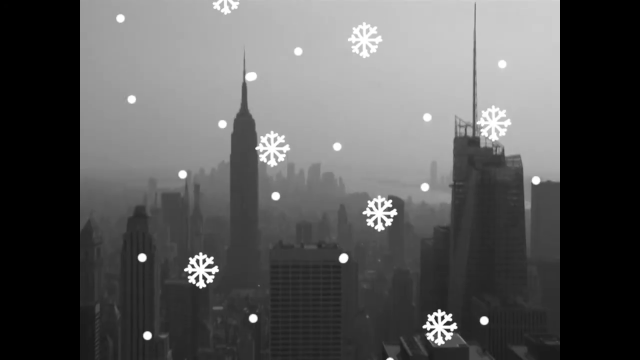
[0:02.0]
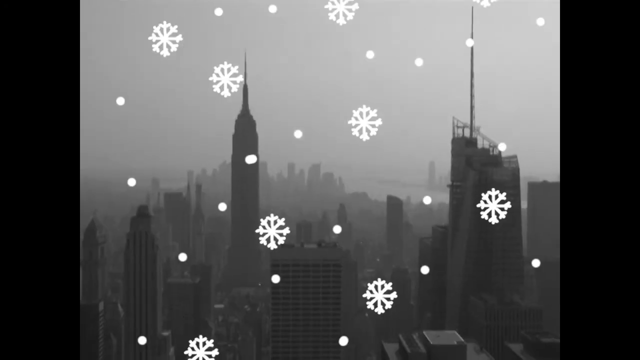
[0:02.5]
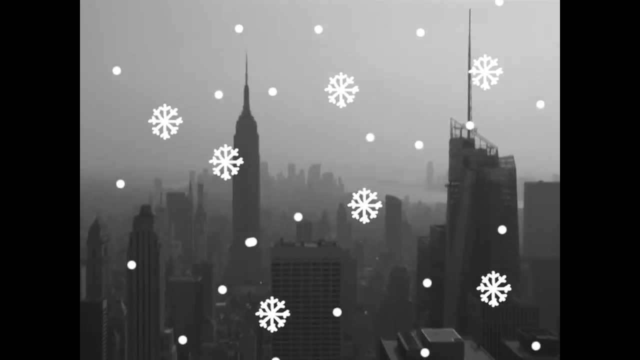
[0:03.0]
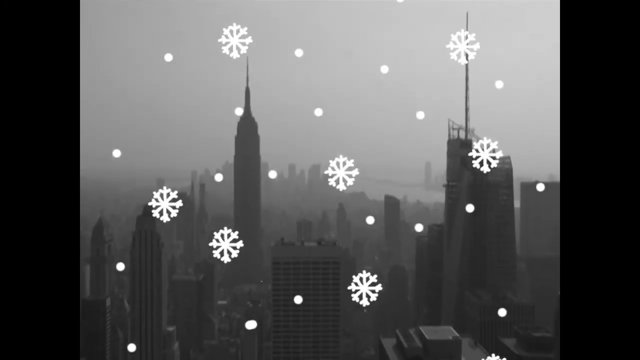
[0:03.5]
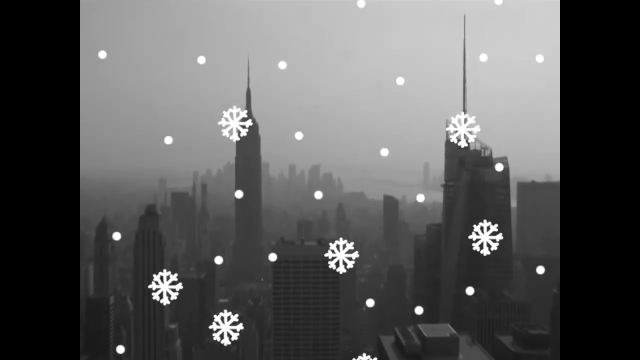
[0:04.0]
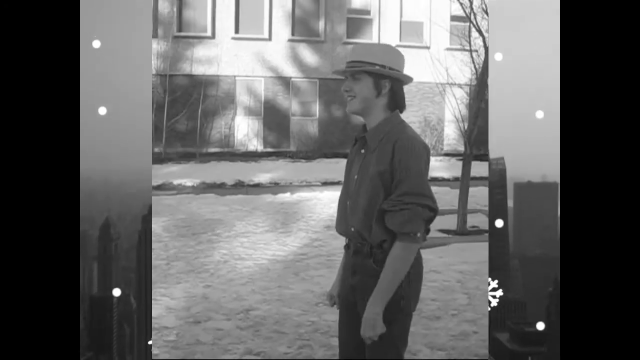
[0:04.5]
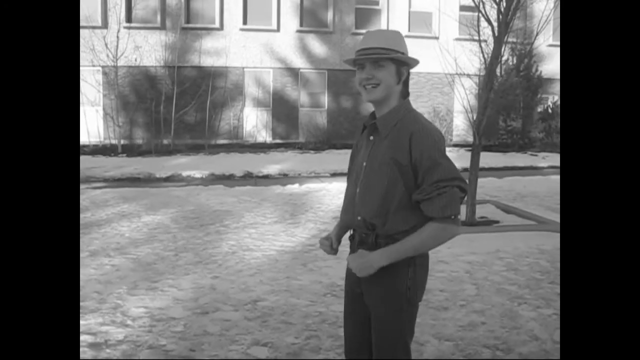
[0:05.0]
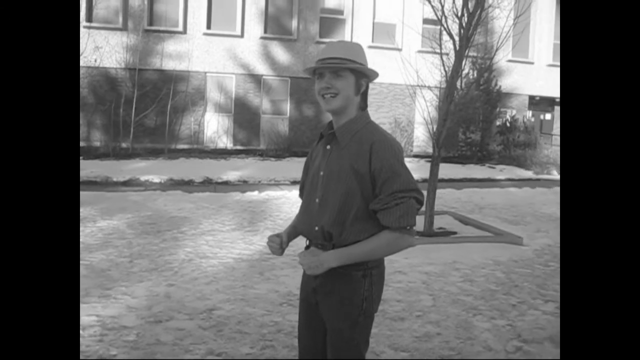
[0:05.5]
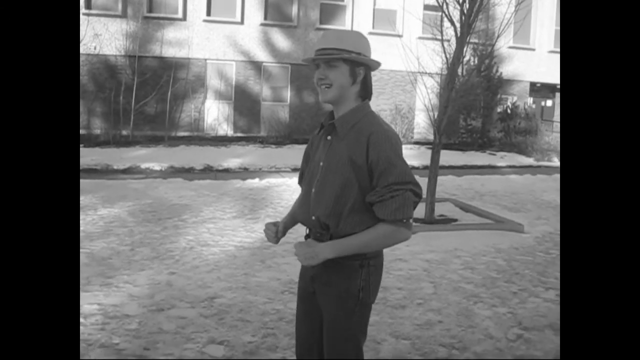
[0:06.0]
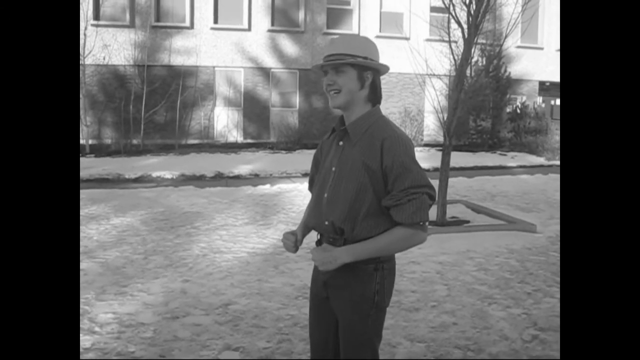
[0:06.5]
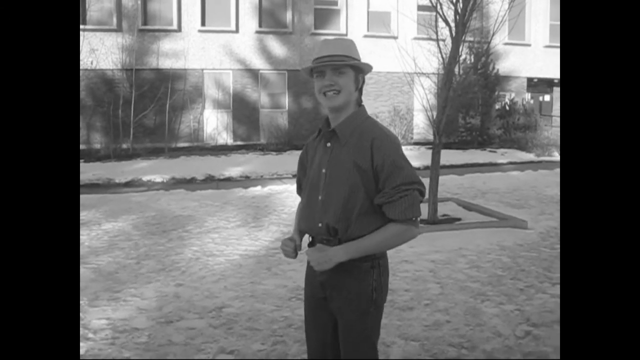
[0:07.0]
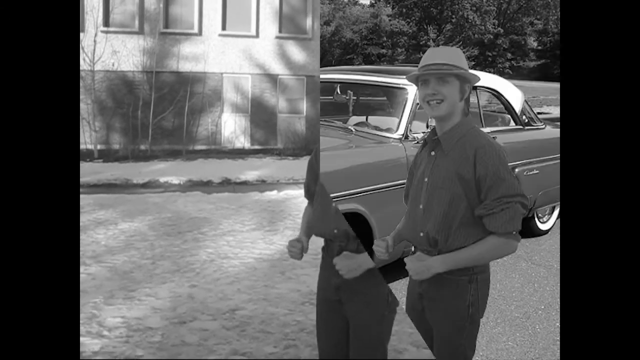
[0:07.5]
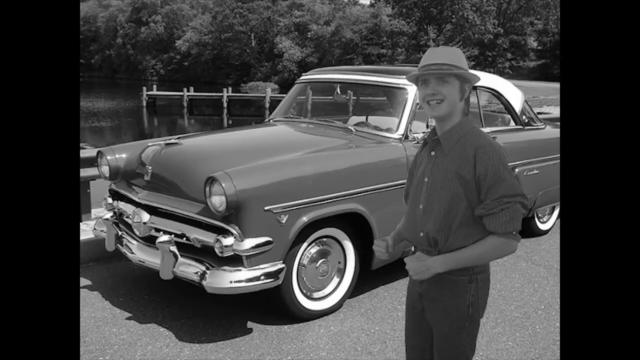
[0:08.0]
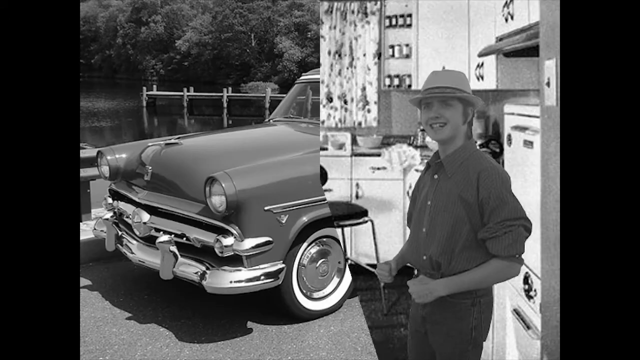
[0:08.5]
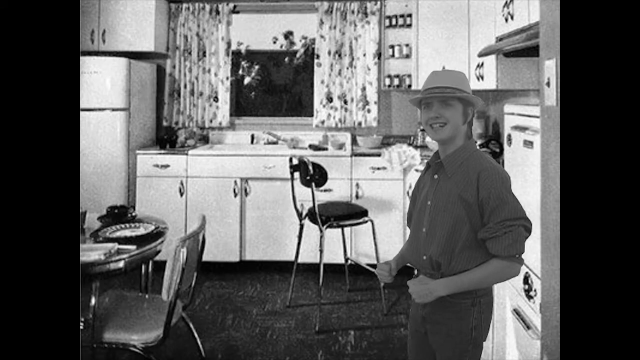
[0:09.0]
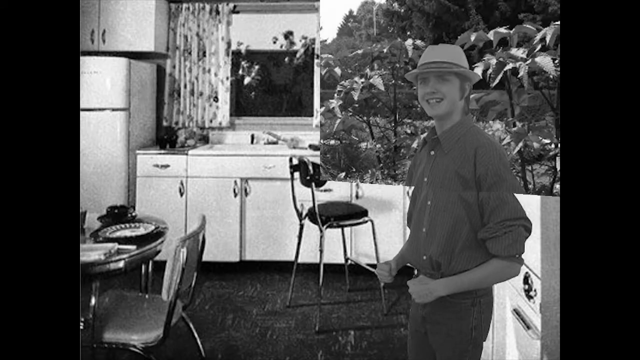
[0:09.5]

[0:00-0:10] Snowflakes fall in the foreground, with buildings and skyscrapers in the background. The setting changes to a young person, apparently a boy, wearing jeans, a button-down shirt and a hat, standing in front of a building with lots of windows; there looks to be snow on the ground. The setting then changes to a scene with an old-time car. The screen quickly turns around and changes to the inside of a kitchen that looks dated, then zips around again to another background, a garden with lots of different plants or flowers.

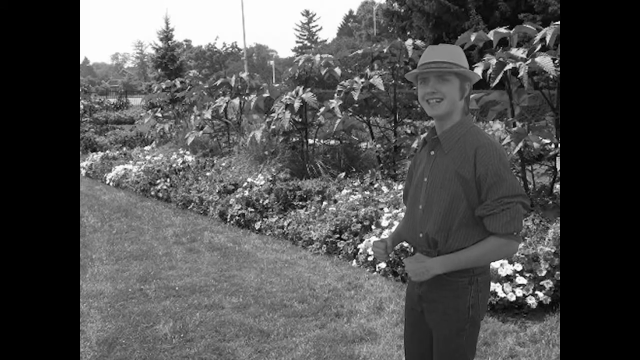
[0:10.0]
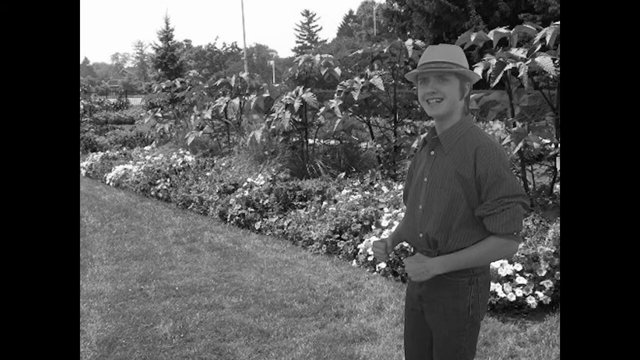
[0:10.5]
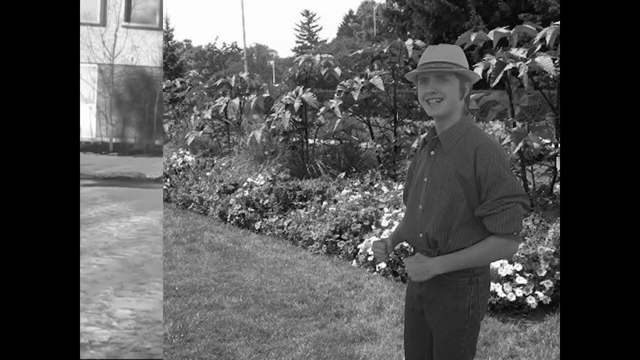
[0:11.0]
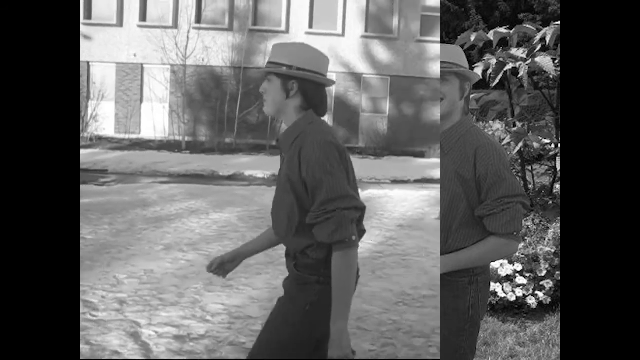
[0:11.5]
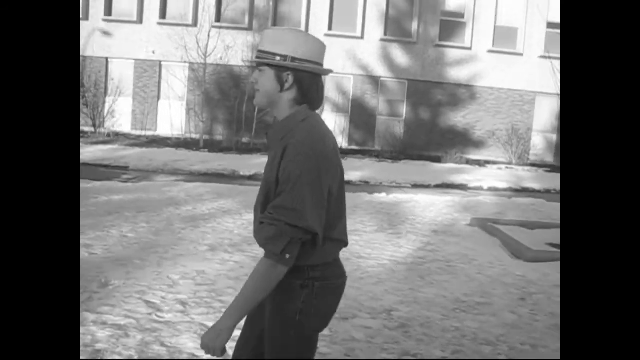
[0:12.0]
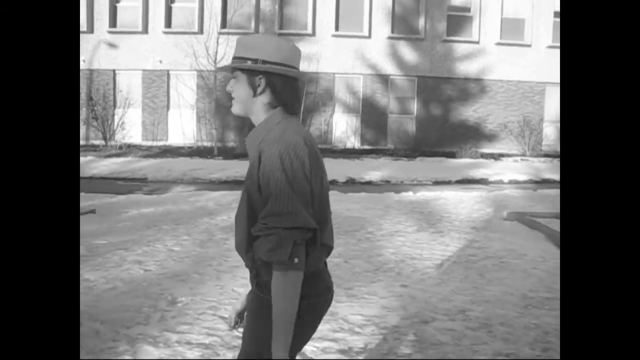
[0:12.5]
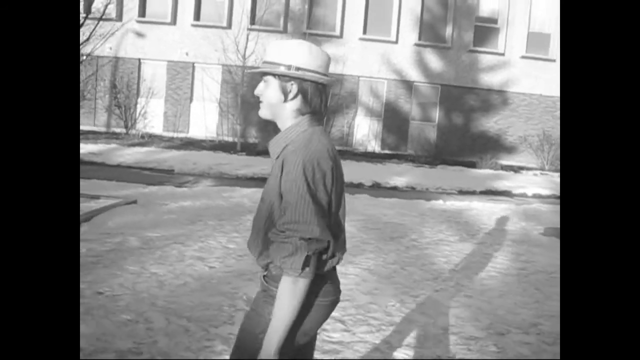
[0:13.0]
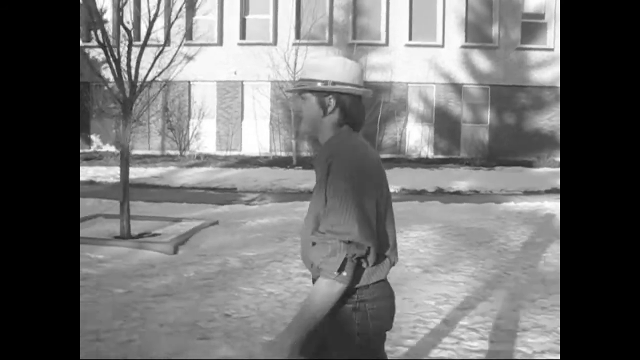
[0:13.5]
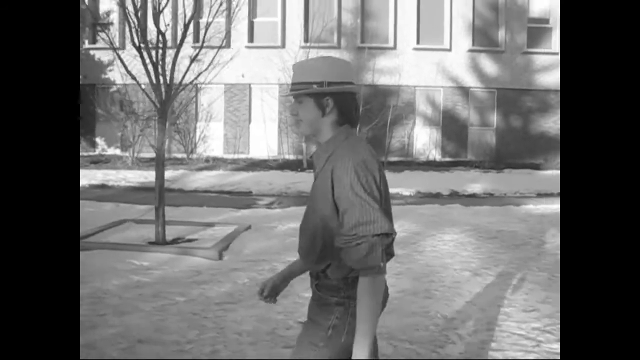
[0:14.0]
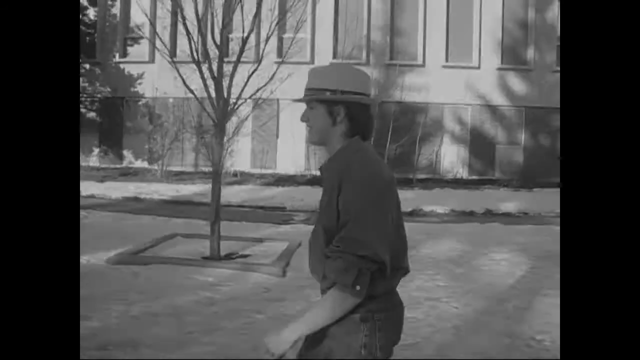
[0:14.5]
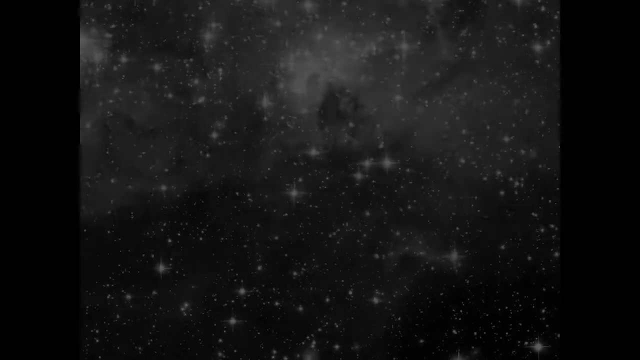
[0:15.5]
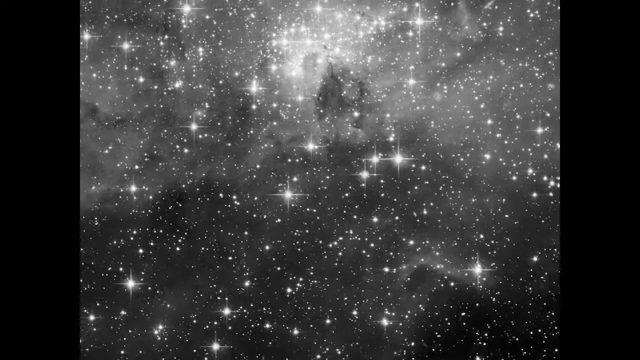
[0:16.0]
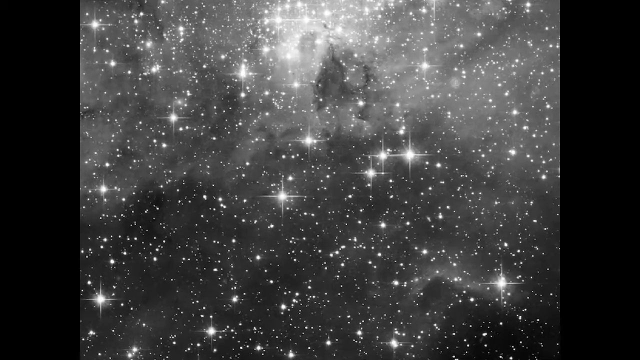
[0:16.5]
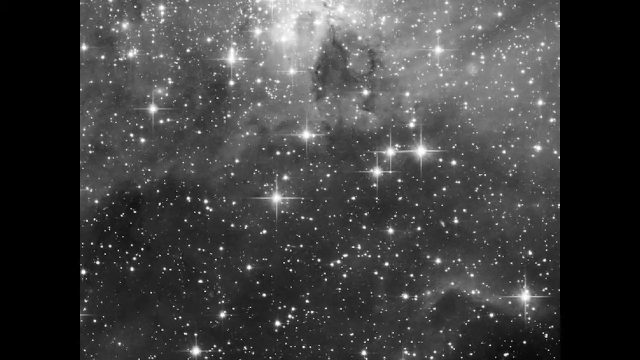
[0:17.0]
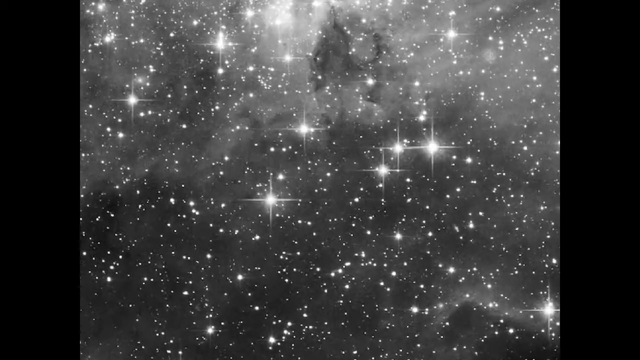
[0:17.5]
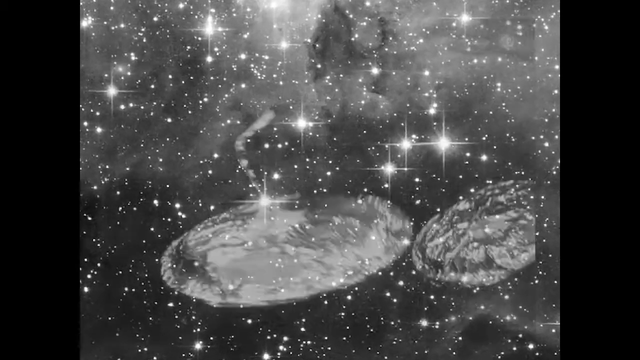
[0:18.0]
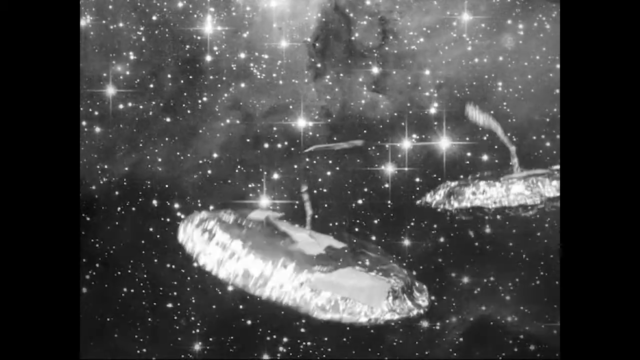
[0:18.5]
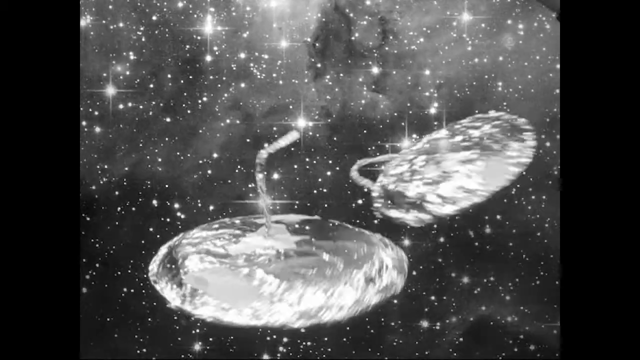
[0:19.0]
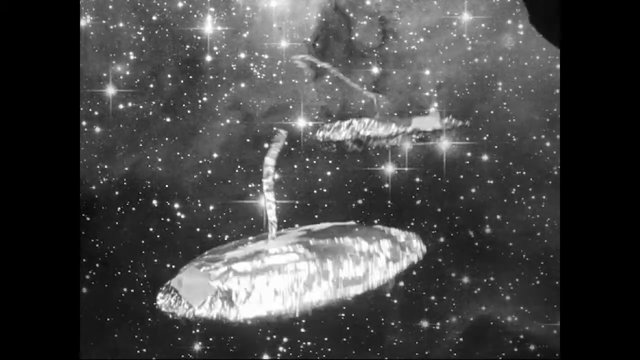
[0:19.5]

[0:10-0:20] The boy with the hat stands in front of a garden; the video is still black and white. The scene switches to him walking across snow-covered ground in front of an apartment building. The setting then changes to a galaxy with stars, and two foil-looking gadgets appear on the screen. They appear to be round, disc-like objects made of foil, each with an almost straw-like piece of foil bent up and coming out of the disc. The two round foil discs float in front of the galaxy-type background, which is still black and white, and off to the side there appears to be possibly a hand holding the two objects, maybe attached to a string.